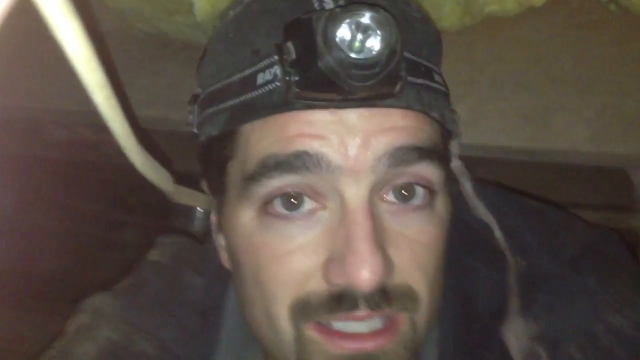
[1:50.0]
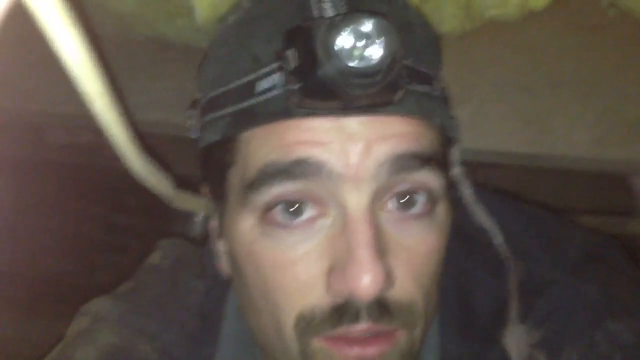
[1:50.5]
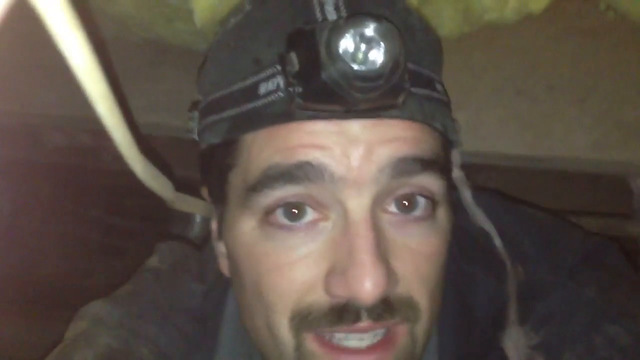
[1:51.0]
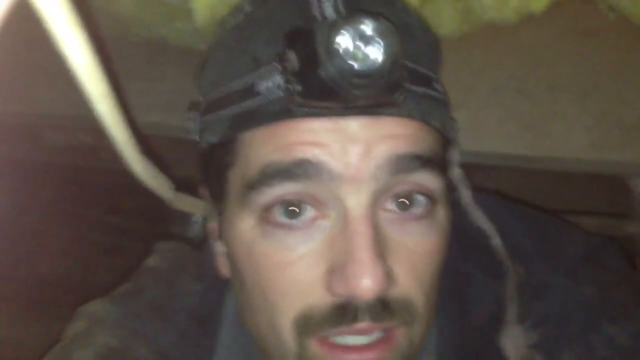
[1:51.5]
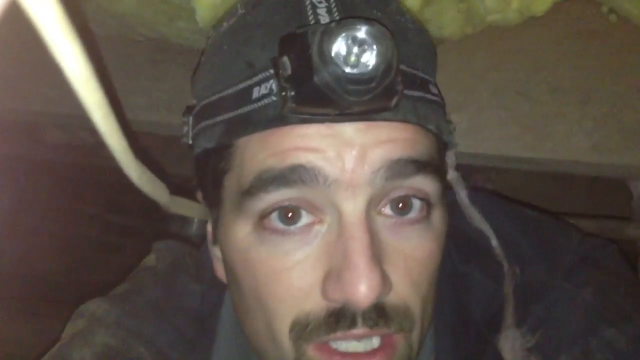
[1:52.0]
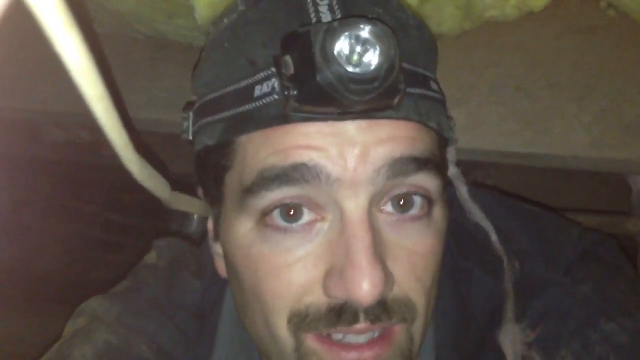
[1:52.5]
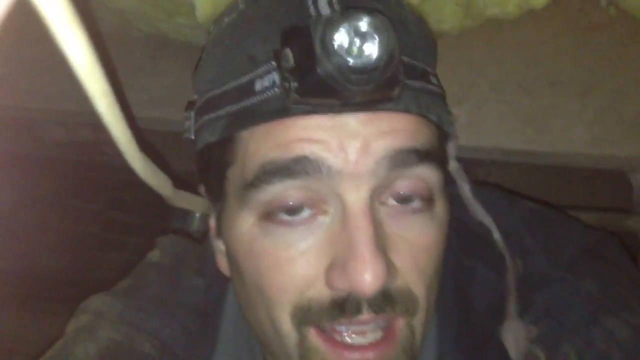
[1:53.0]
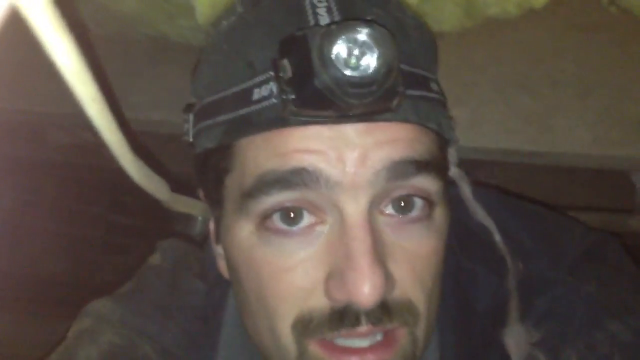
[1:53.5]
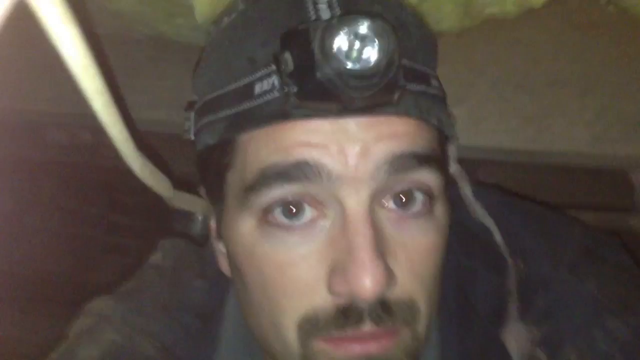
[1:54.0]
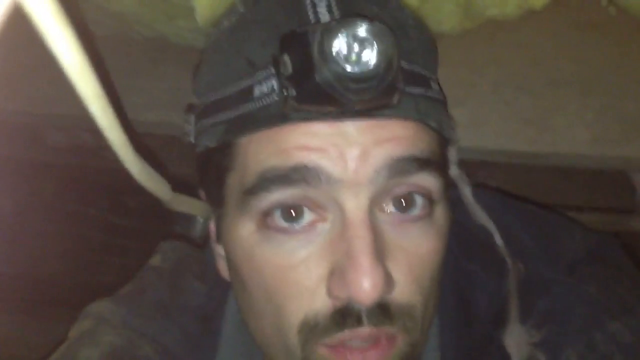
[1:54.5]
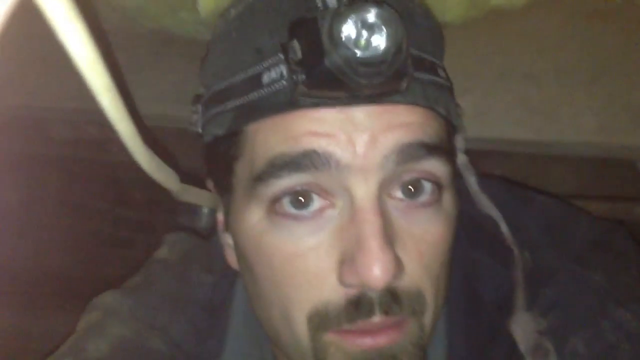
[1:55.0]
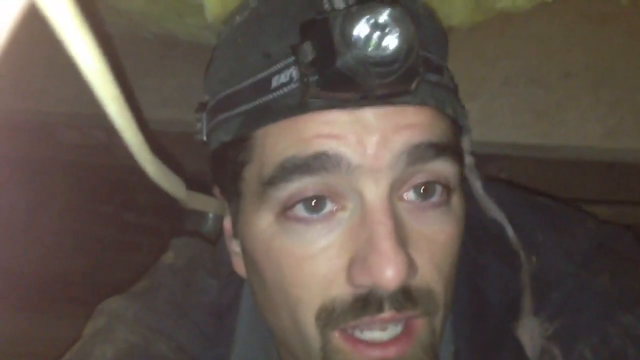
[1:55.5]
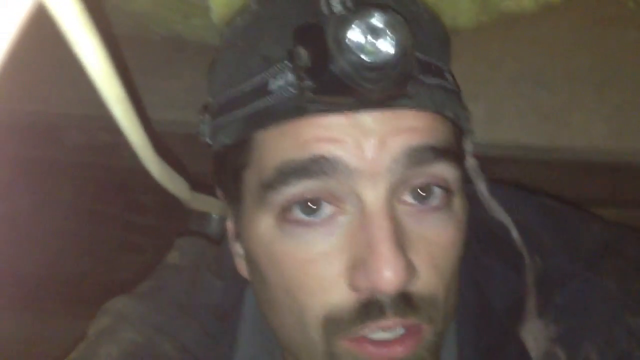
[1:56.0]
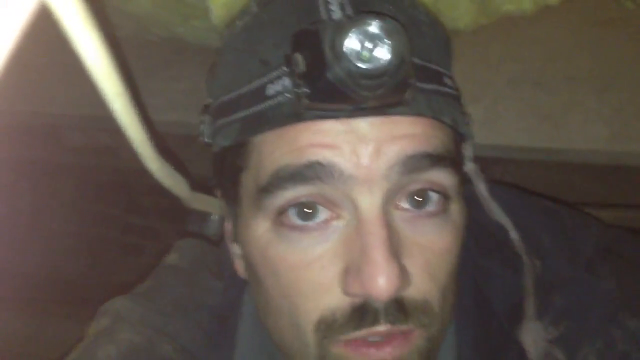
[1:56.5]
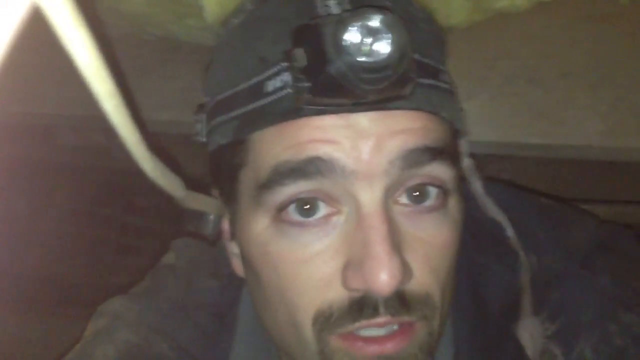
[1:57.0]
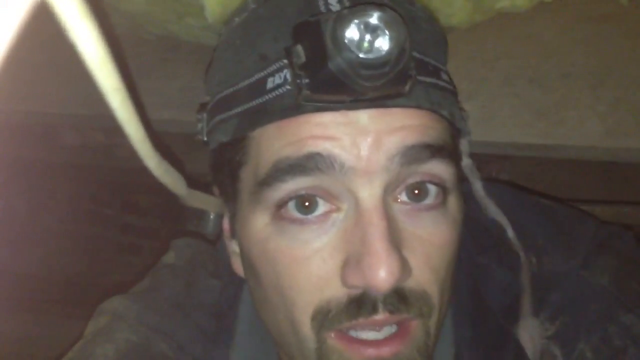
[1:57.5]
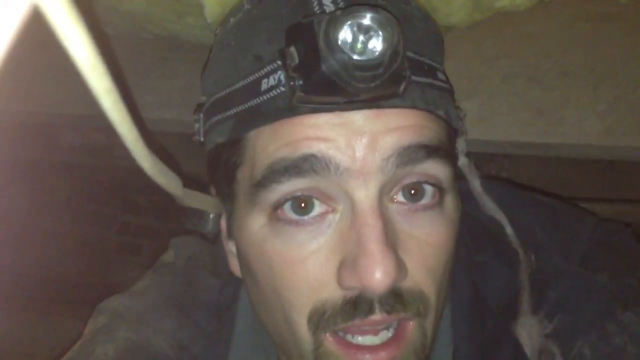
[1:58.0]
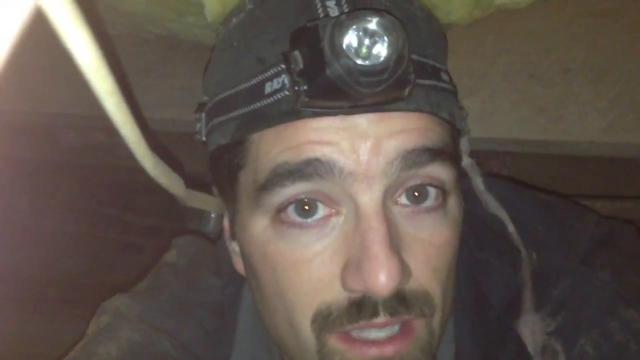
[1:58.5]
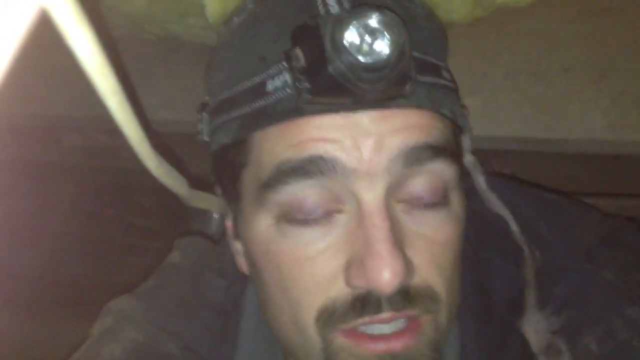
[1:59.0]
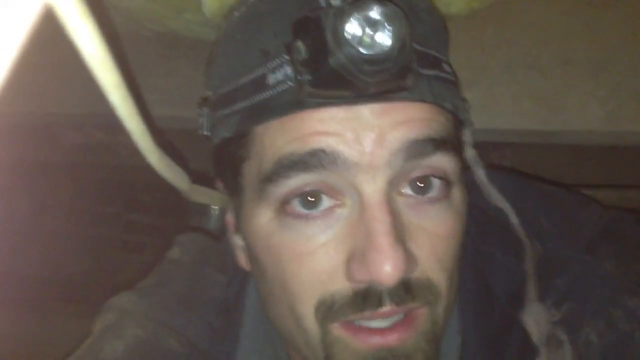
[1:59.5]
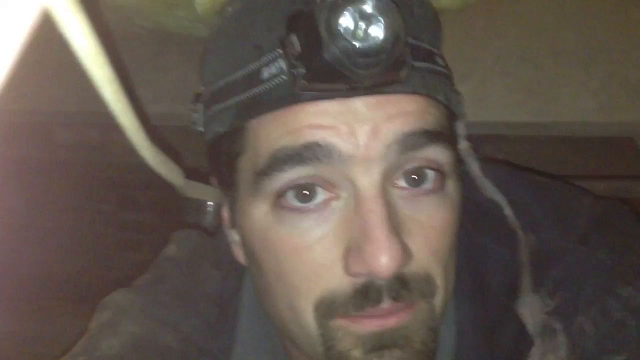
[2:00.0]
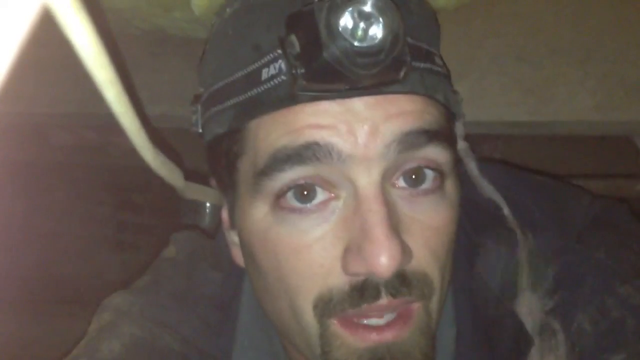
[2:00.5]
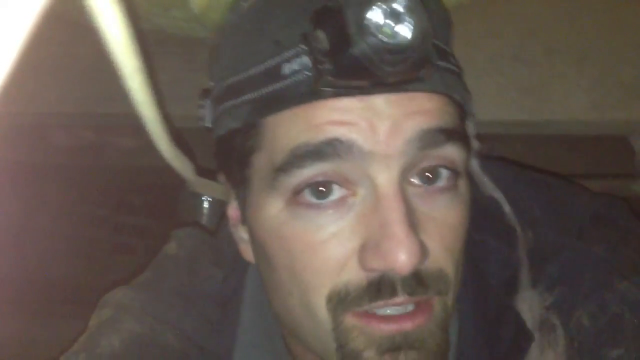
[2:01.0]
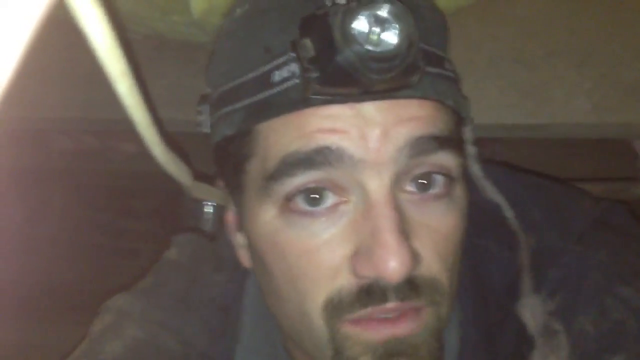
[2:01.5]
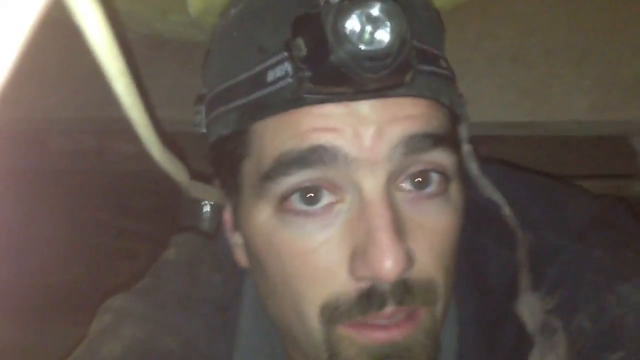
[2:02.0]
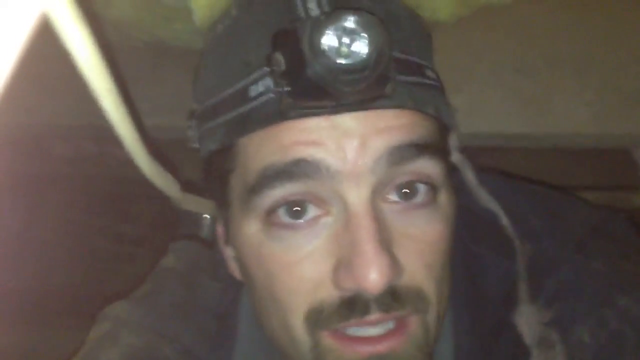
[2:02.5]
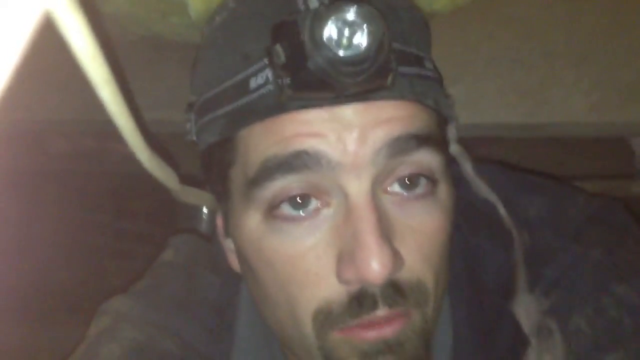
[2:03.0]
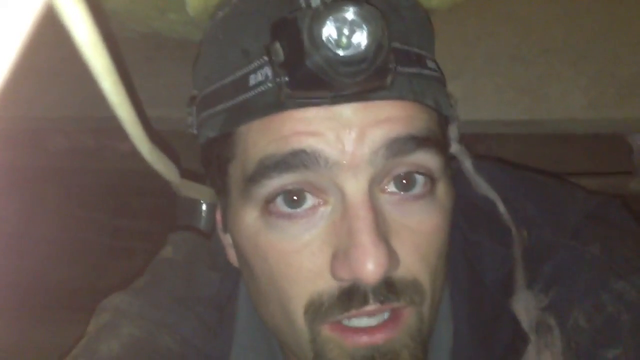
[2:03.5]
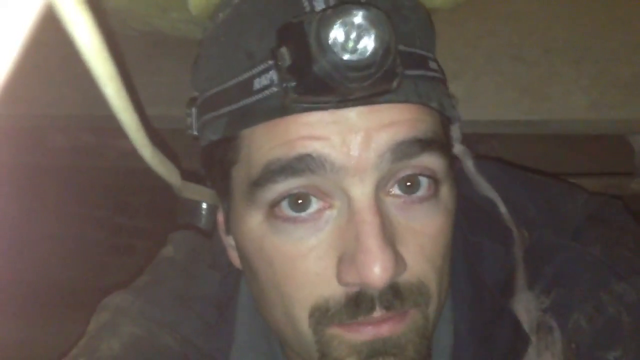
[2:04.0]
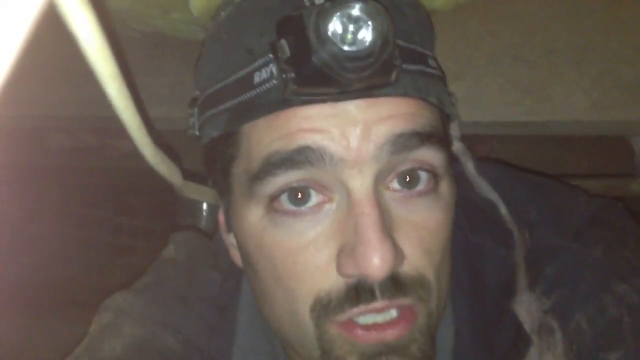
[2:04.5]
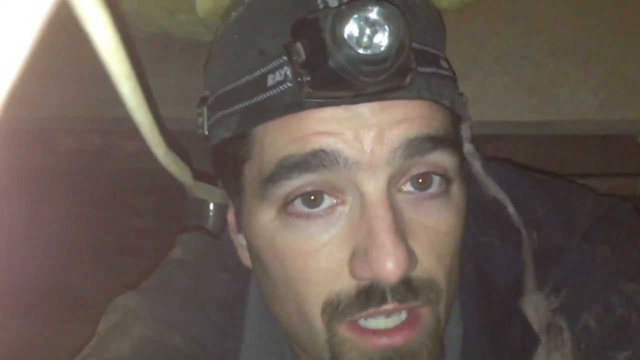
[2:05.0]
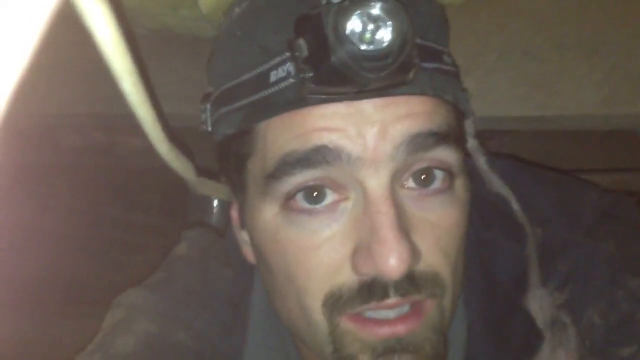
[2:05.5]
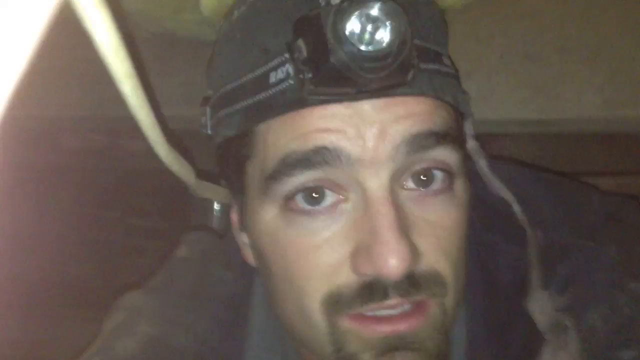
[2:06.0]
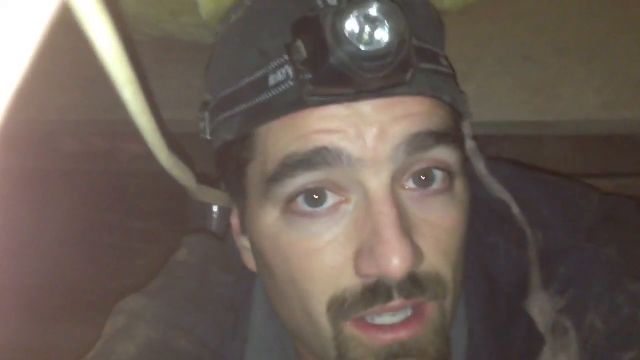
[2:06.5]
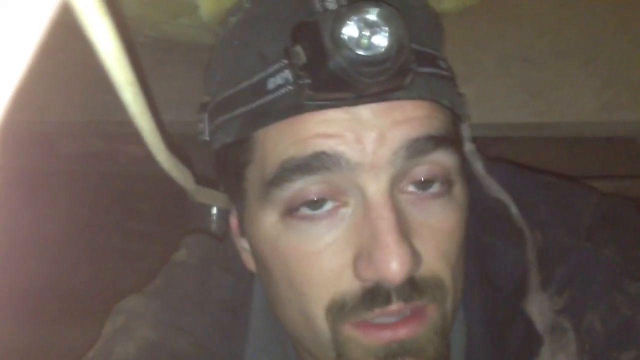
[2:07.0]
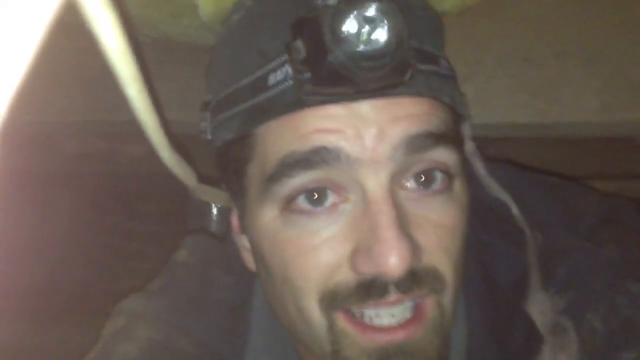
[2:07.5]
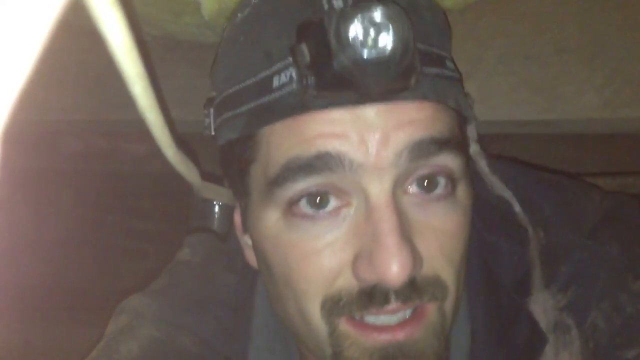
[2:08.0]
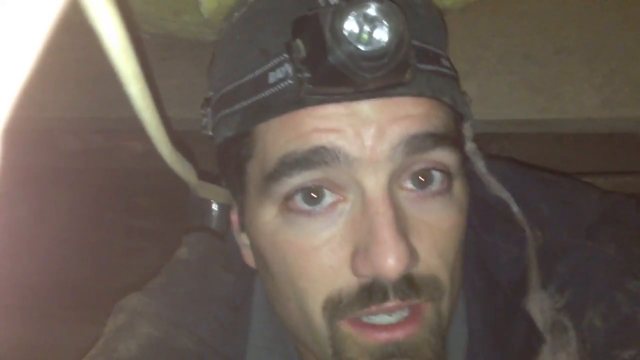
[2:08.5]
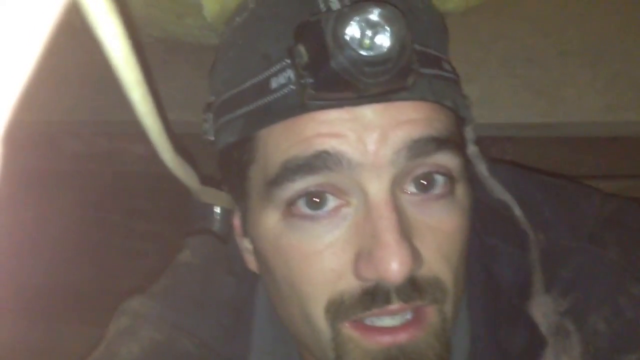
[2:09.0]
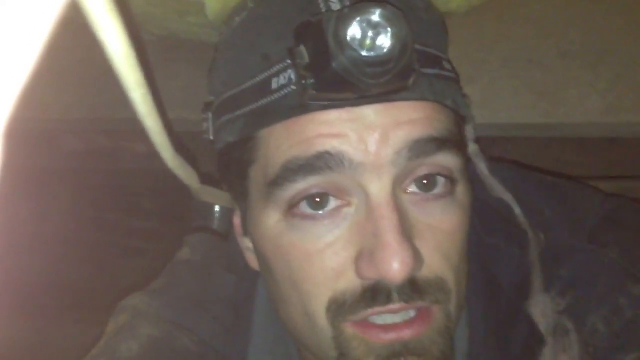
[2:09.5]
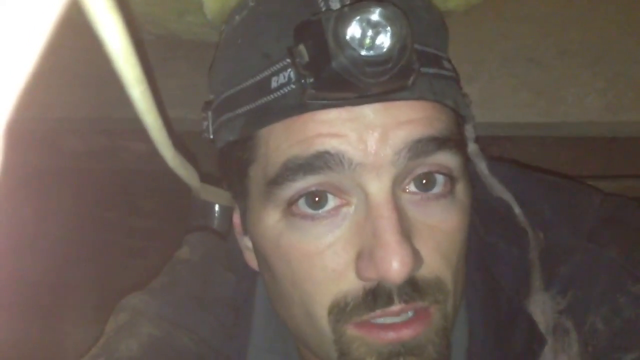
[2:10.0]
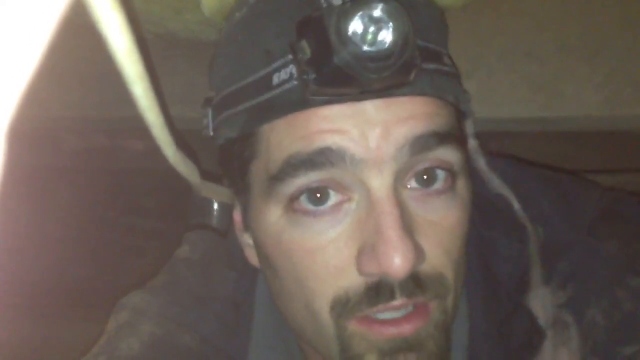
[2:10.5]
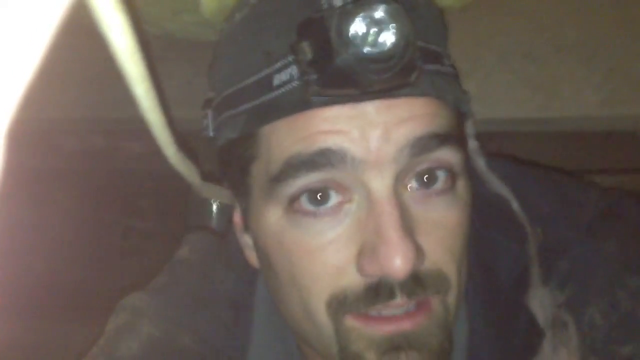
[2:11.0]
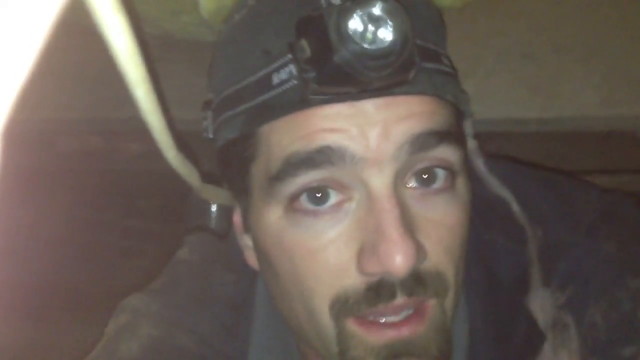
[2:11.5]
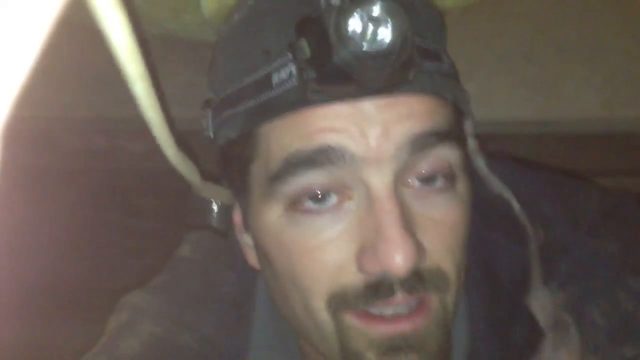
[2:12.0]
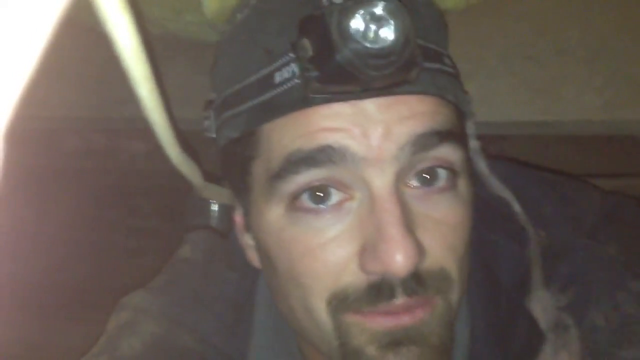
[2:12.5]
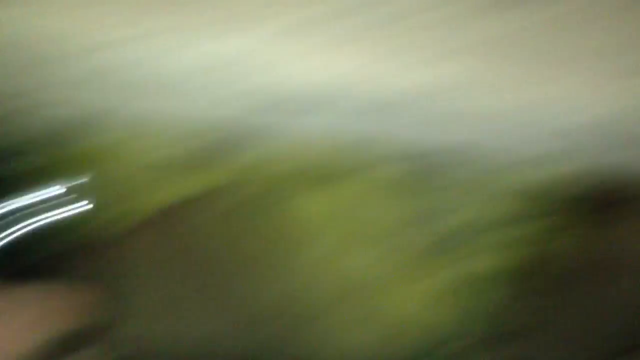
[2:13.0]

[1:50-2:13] The man still looks into the camera, talking, as a little dust at the bottom comes up where he talks. He lies flat on the ground, with probably only about two feet between the ground and the wood above him, as he is under the house. The camera light on his head moves back and forth. He talks directly into the camera, glancing a little to the right a couple of times, without much movement or expression in the really tight space. The light comes in a little again in the upper left corner; he nods his head forward a little and kind of half blinks a few times. Then he kind of smiles as he pans toward the right, showing some of the asbestos and the wood in the small crawl space.